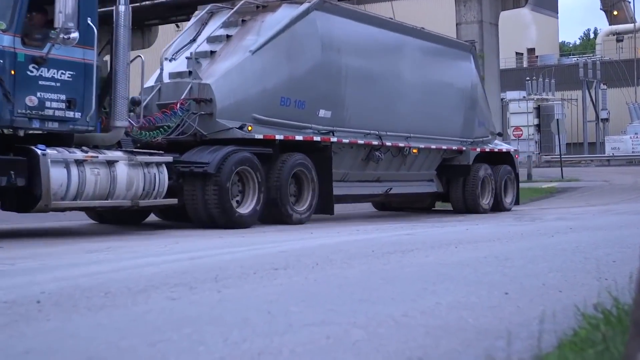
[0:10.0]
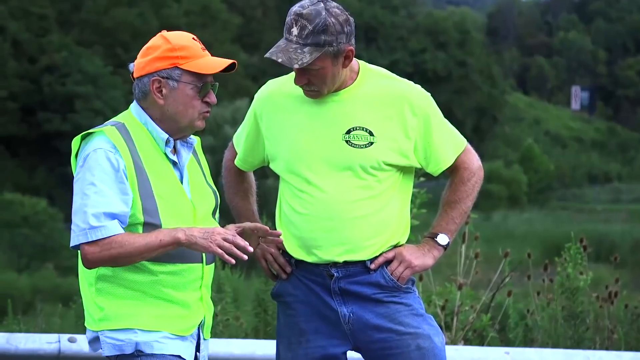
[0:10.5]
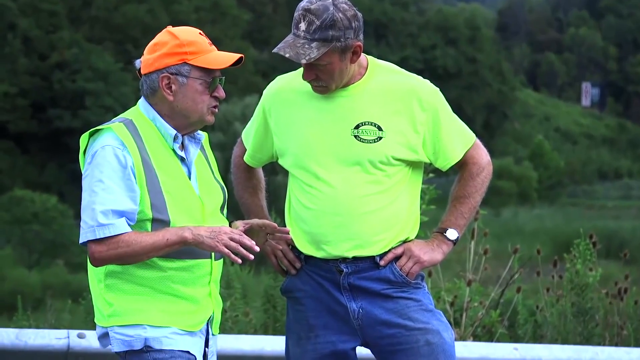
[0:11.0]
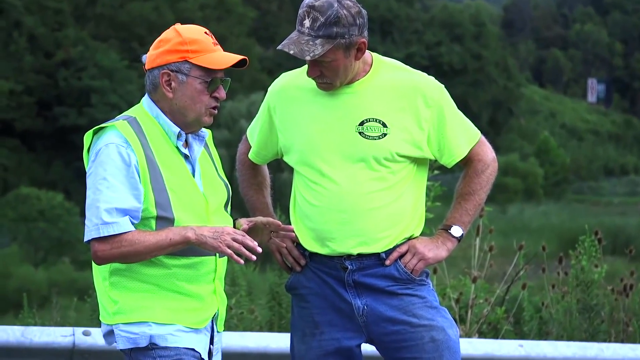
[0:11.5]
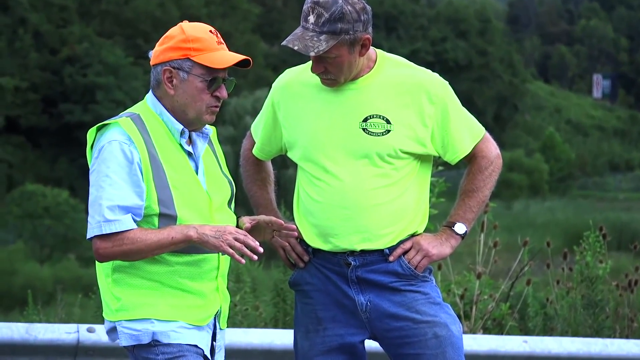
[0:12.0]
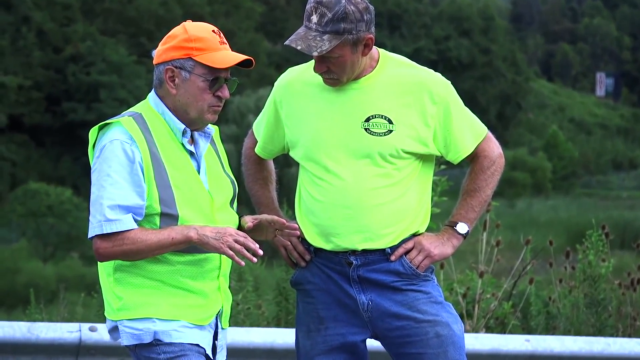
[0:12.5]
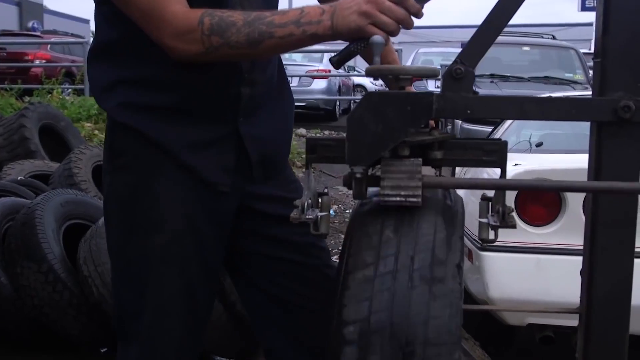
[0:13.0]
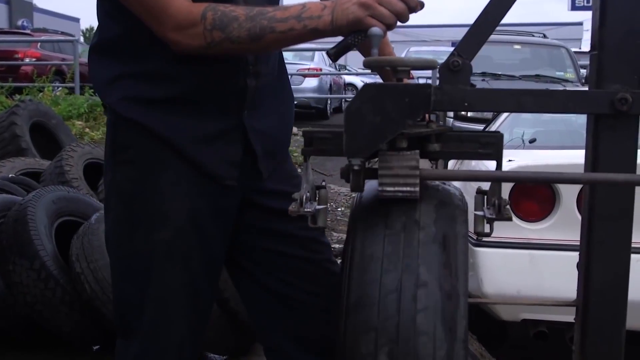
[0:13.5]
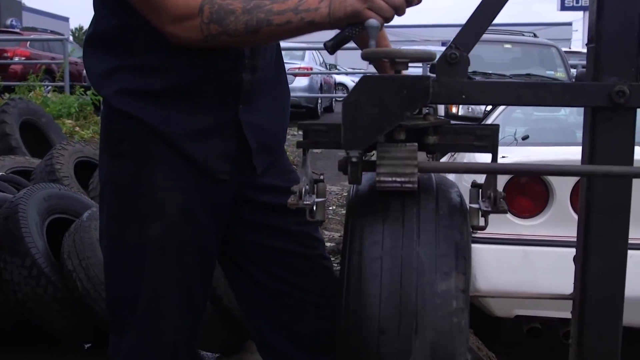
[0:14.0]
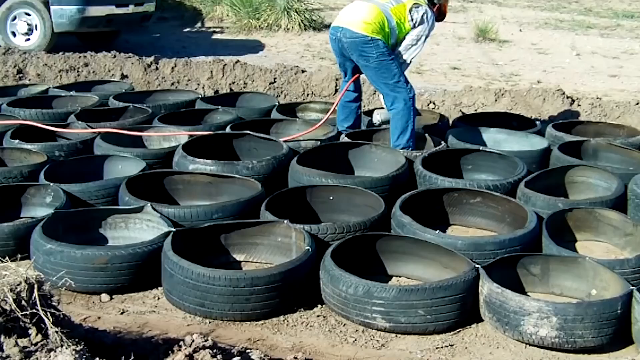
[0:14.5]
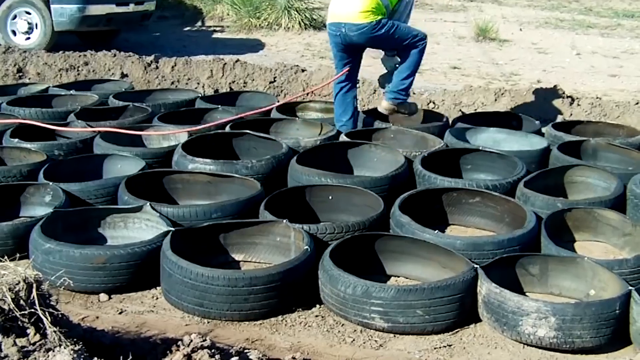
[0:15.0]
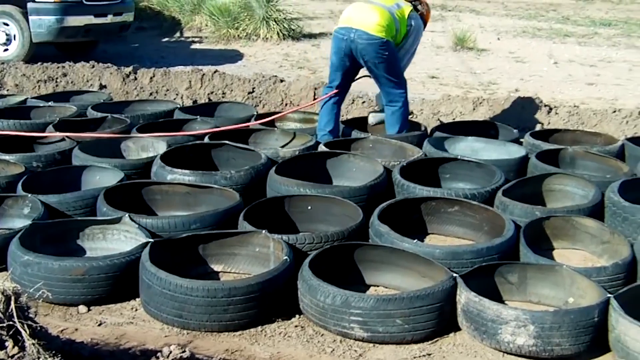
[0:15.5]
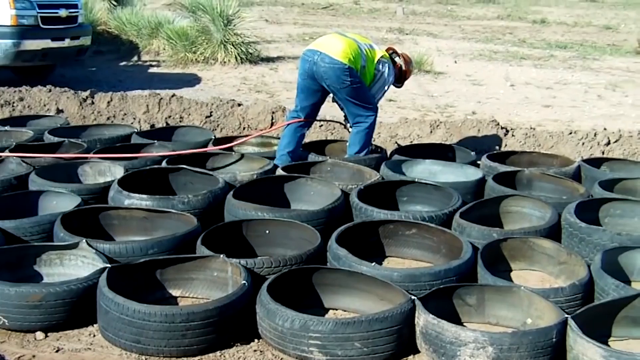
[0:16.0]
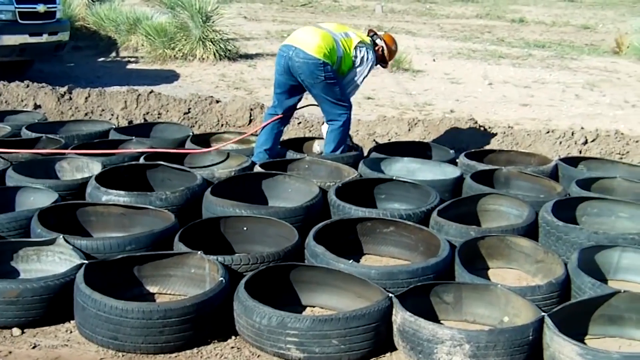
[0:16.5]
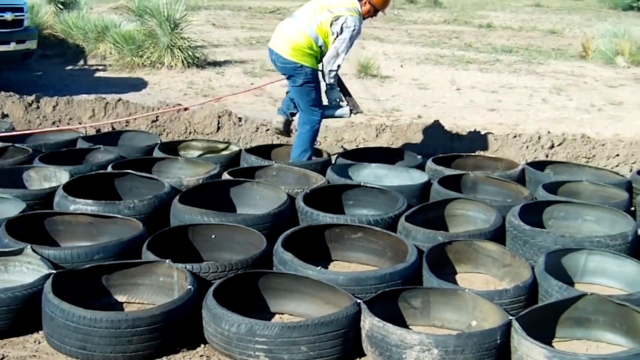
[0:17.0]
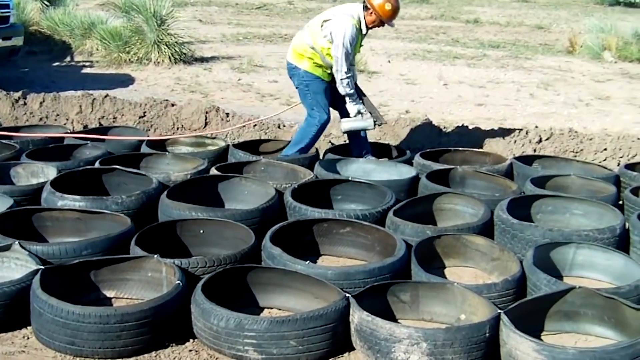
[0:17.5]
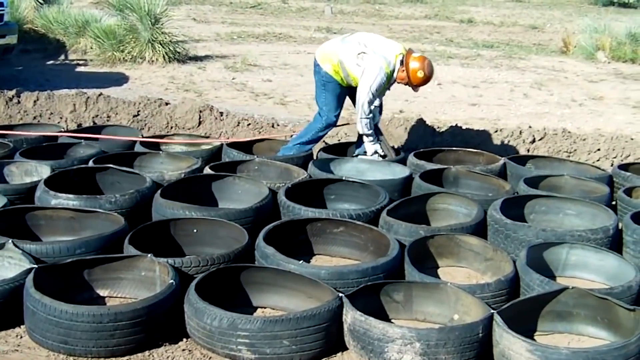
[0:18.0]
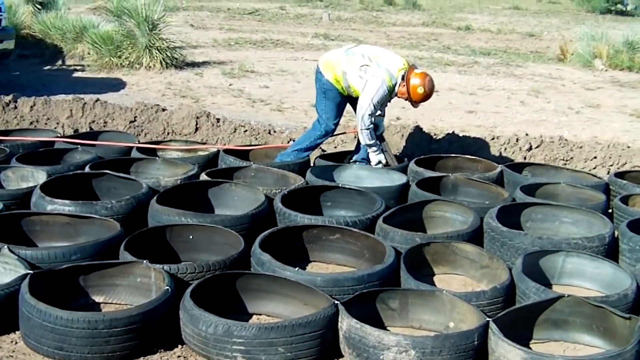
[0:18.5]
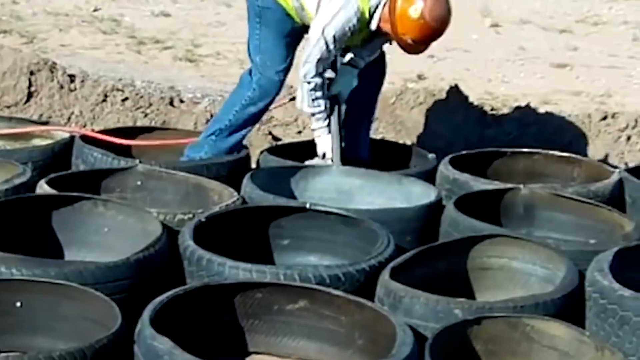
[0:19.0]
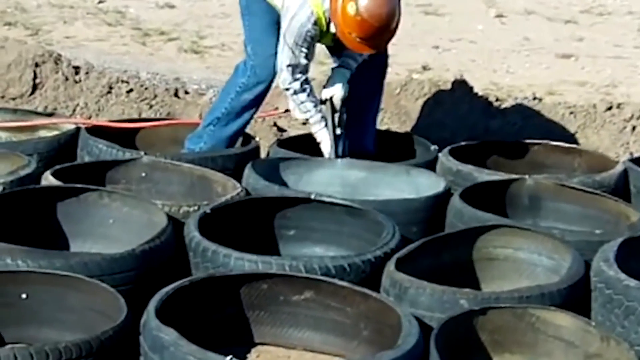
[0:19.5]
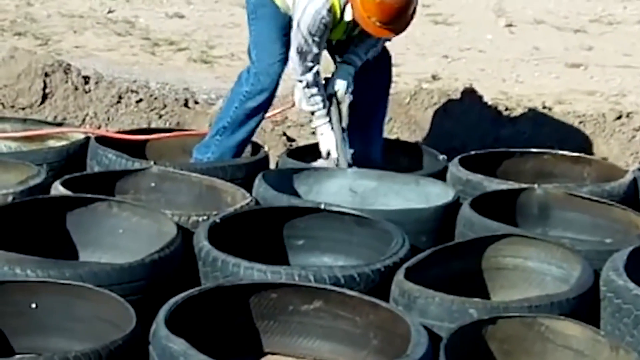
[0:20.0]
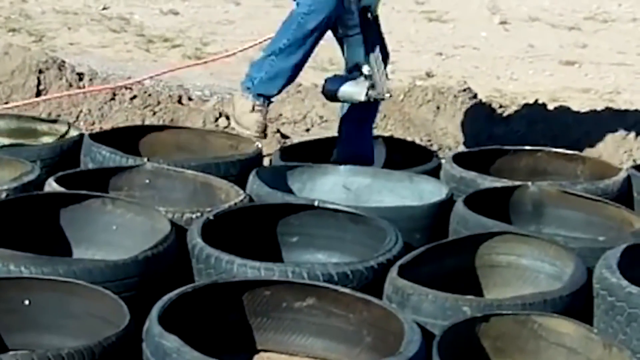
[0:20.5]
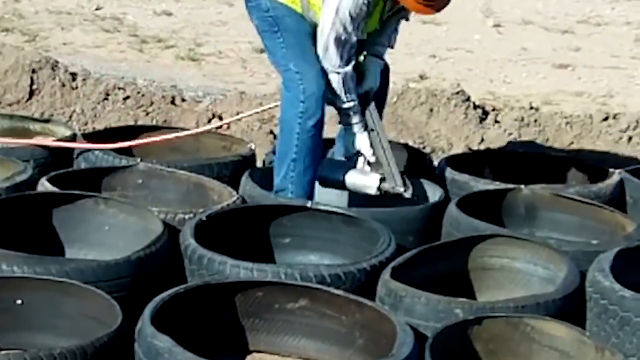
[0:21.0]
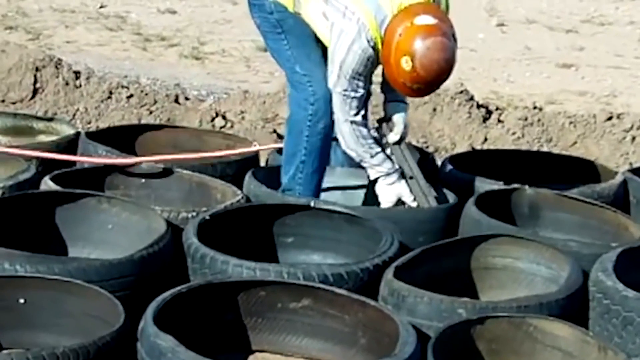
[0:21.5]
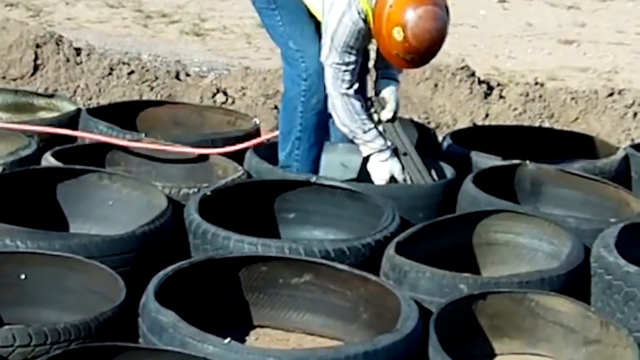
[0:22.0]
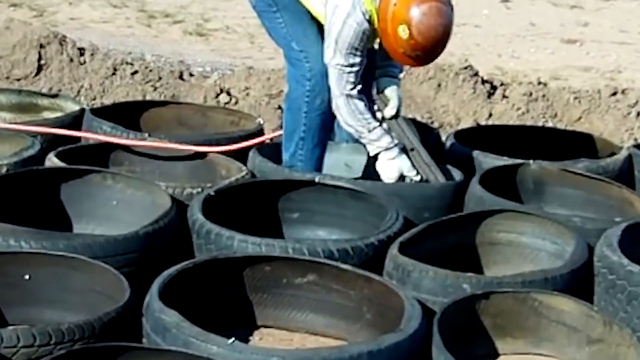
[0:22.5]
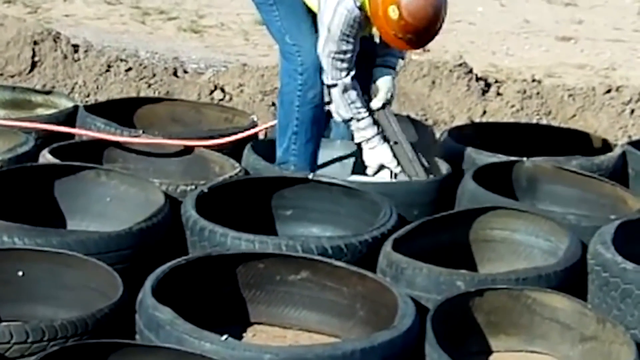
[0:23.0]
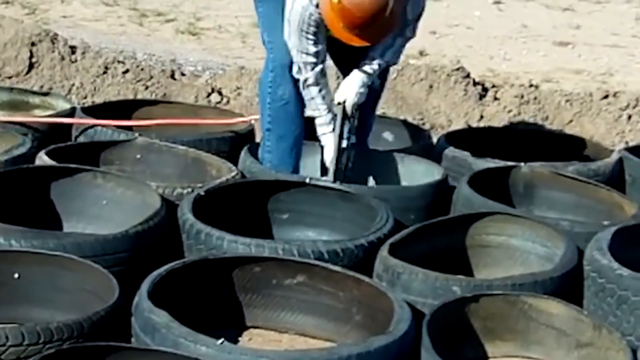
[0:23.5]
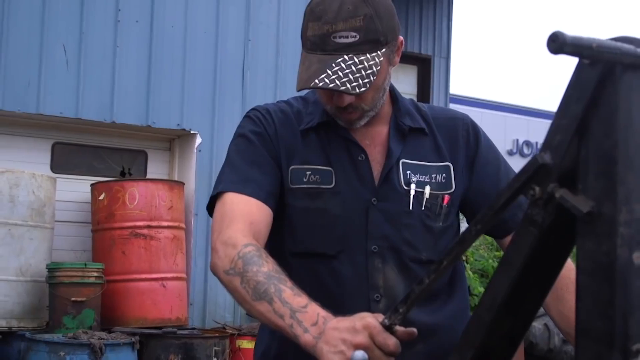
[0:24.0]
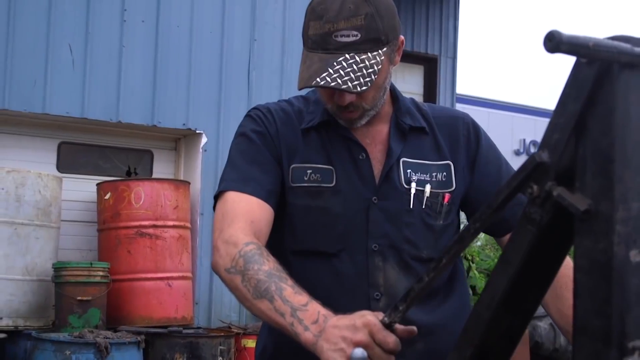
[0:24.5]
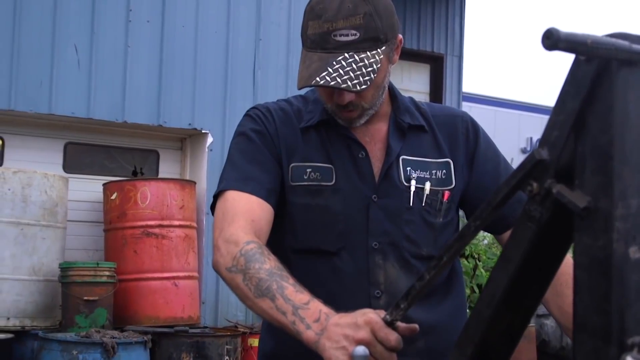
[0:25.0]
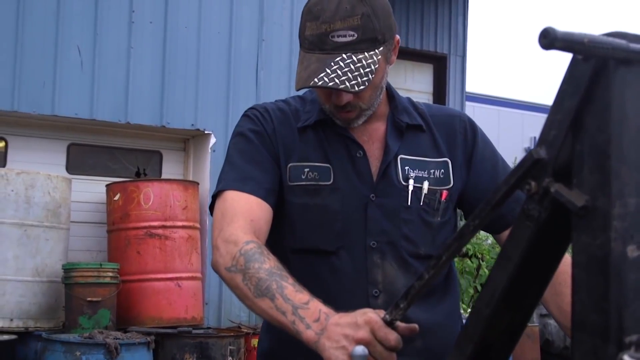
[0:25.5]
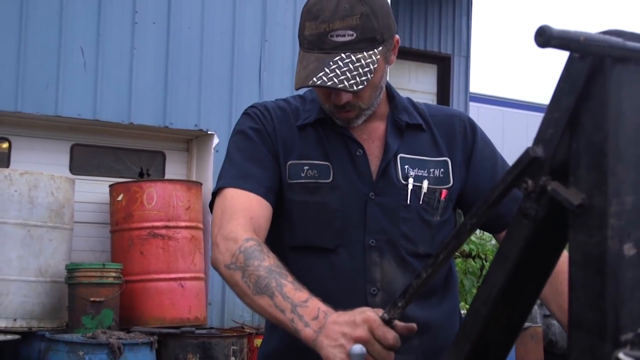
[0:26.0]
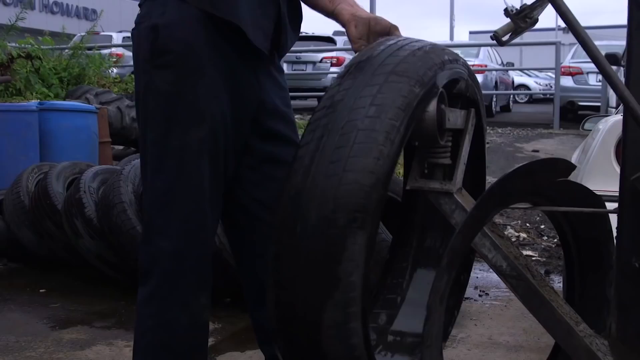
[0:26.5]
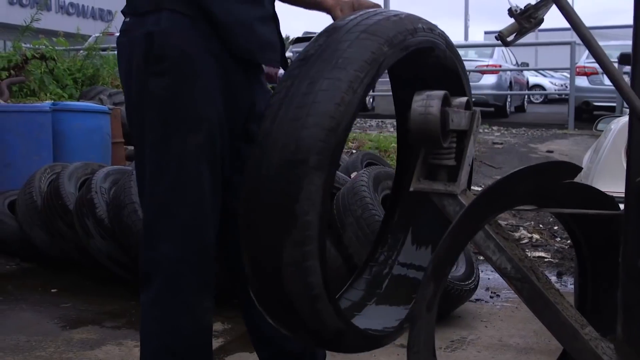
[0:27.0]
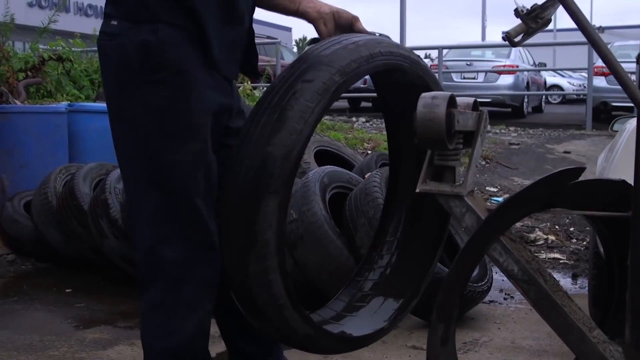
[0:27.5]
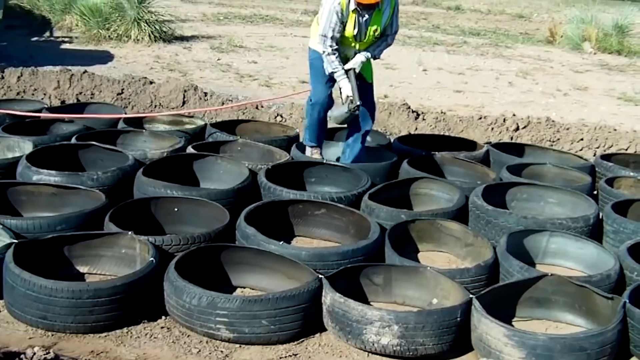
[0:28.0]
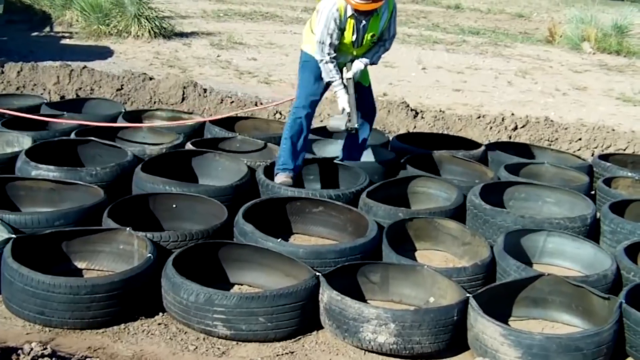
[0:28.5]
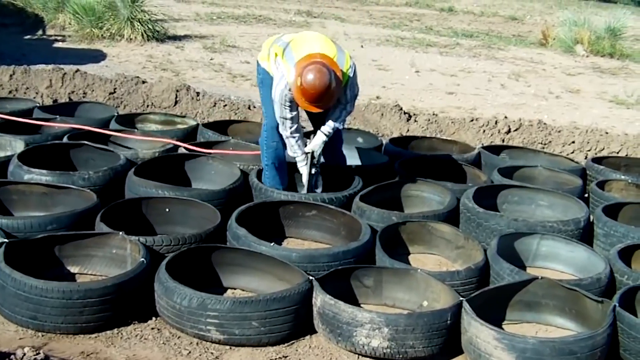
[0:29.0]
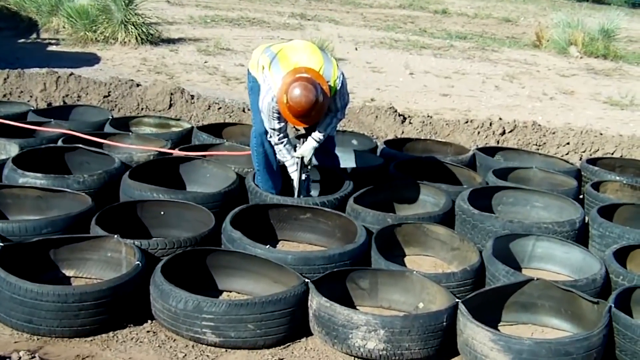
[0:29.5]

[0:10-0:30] The cement or concrete trucks drive away. The setting seems to be a concrete factory, with industrial-looking building parts in the background and sort of a power plant with electrical wires to the right of the truck in the background. The video cuts to two men talking to each other; the man on the left wears a green safety vest and the other wears a green shirt in a matching color. A close-up shows a possible engineer cutting edges into a car wheel. Another man is shown with hollowed-out car wheels, only the black outer parts remaining, the inside smoothed out to be very thin; he uses a tool to put something on the edges of these wheels. The video returns to the man cutting things out of the wheel, who wears a black shirt. His name is John, and he seems to work for a company called Trenard Inc.